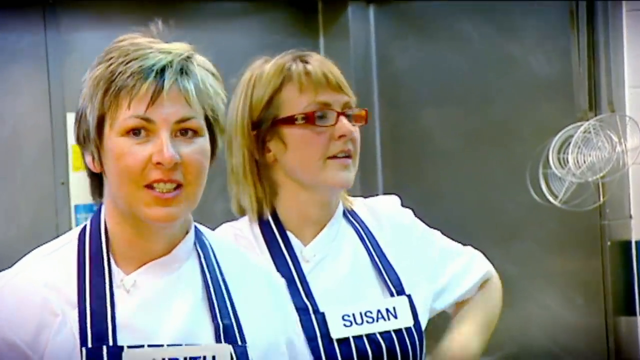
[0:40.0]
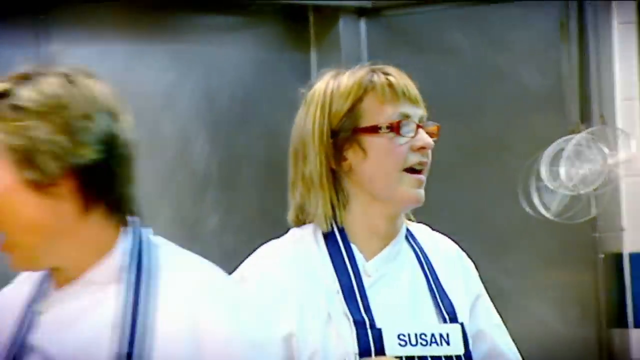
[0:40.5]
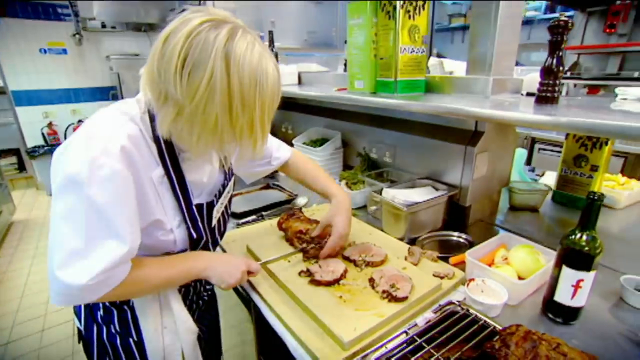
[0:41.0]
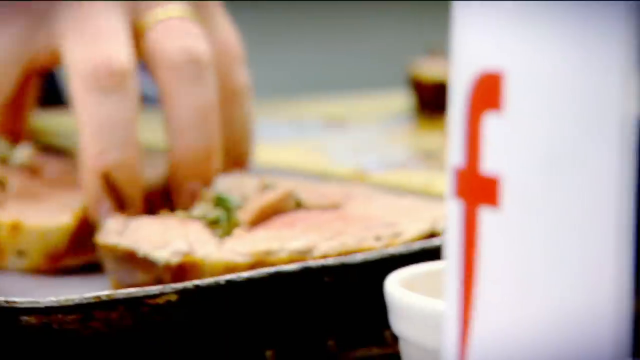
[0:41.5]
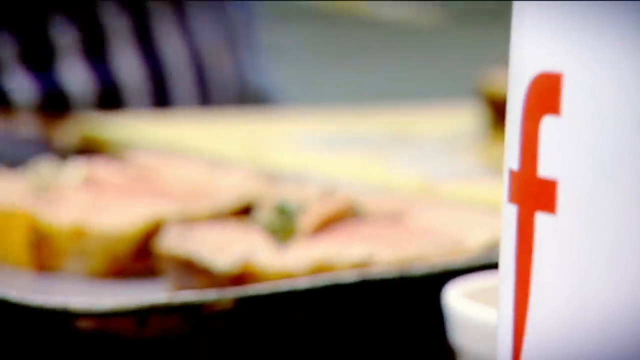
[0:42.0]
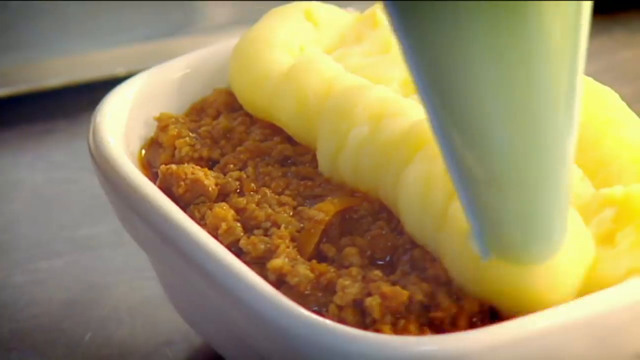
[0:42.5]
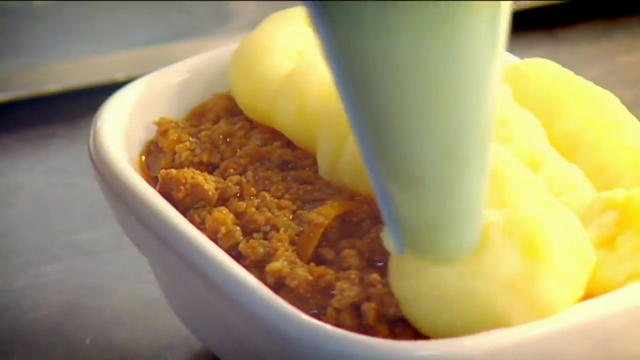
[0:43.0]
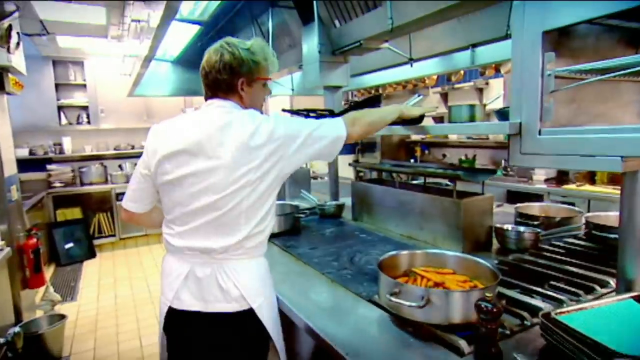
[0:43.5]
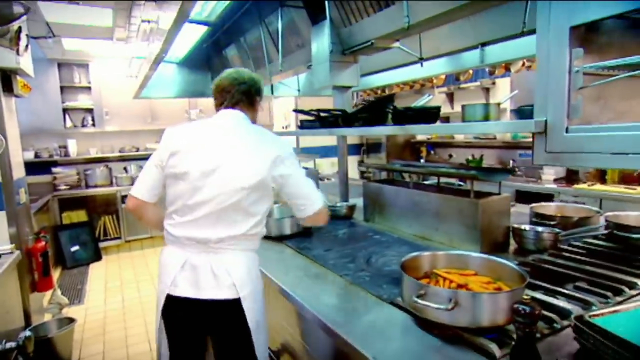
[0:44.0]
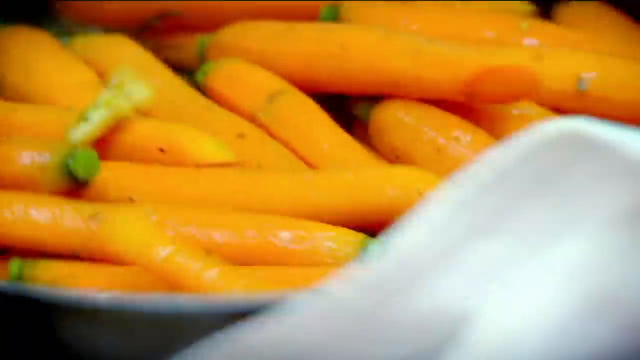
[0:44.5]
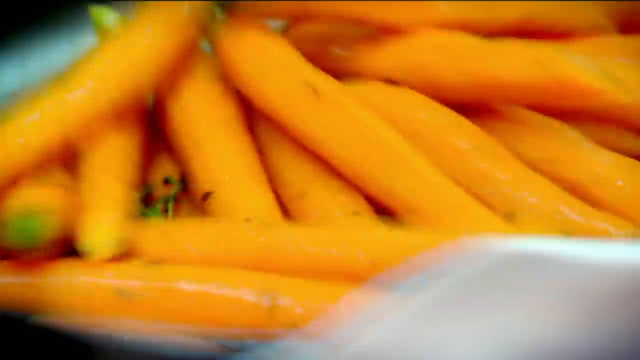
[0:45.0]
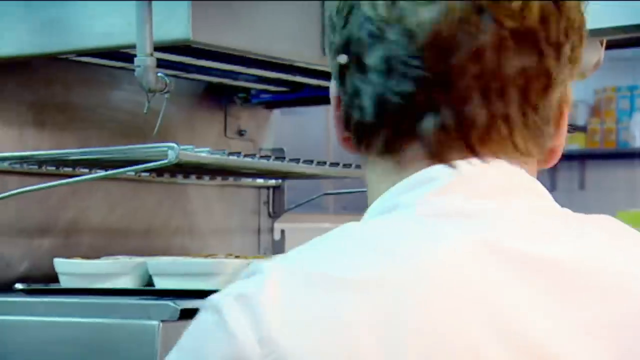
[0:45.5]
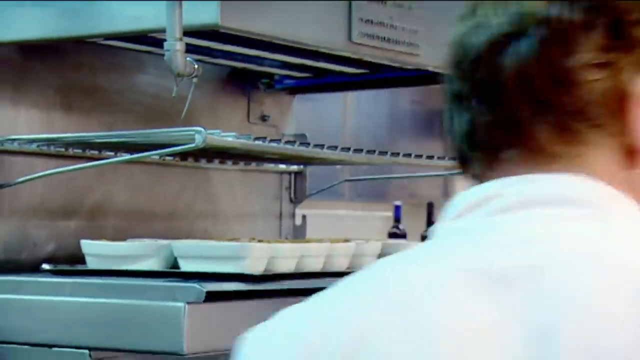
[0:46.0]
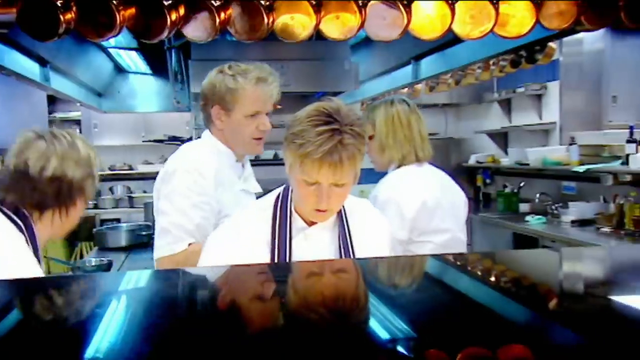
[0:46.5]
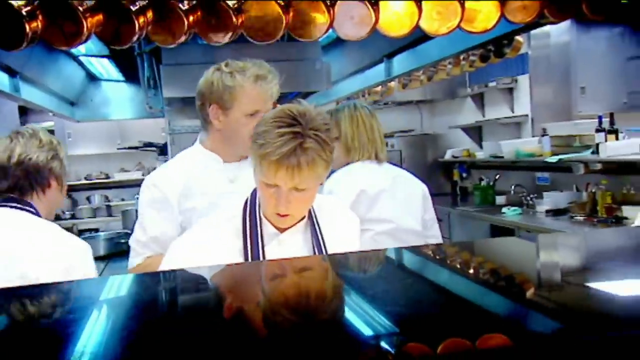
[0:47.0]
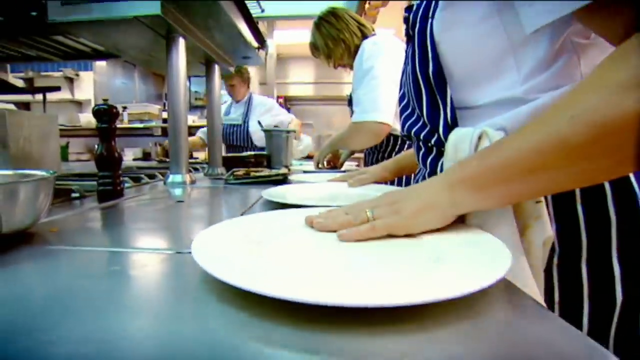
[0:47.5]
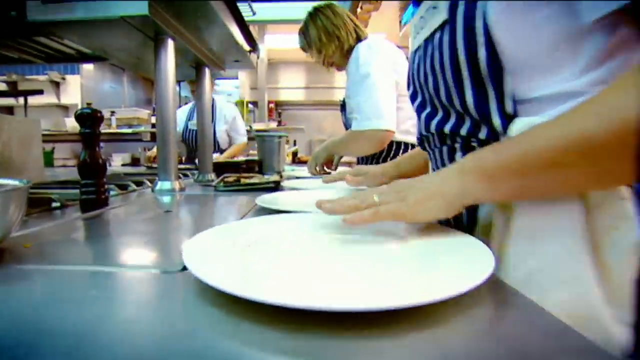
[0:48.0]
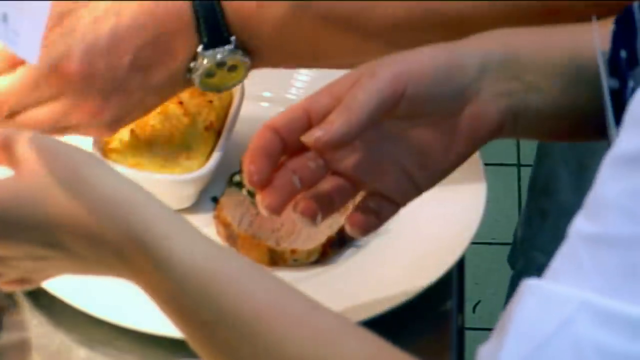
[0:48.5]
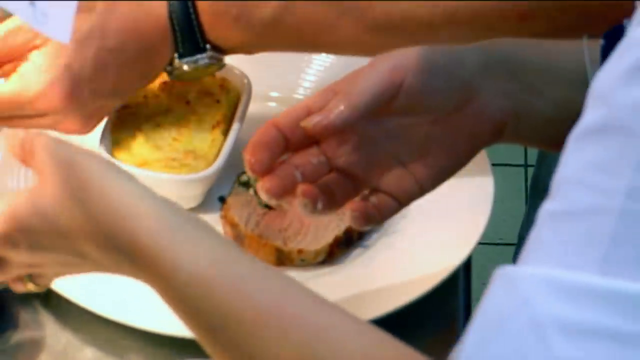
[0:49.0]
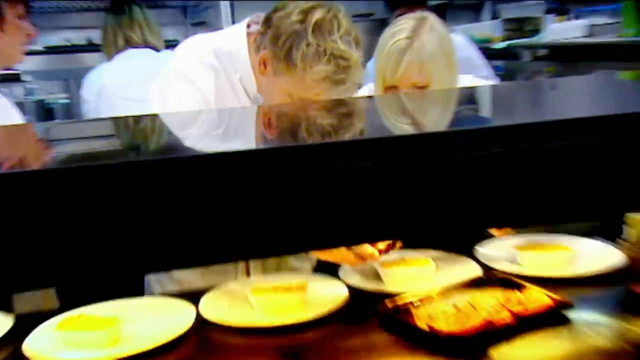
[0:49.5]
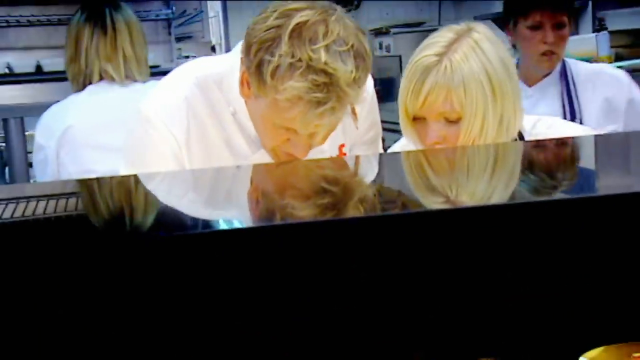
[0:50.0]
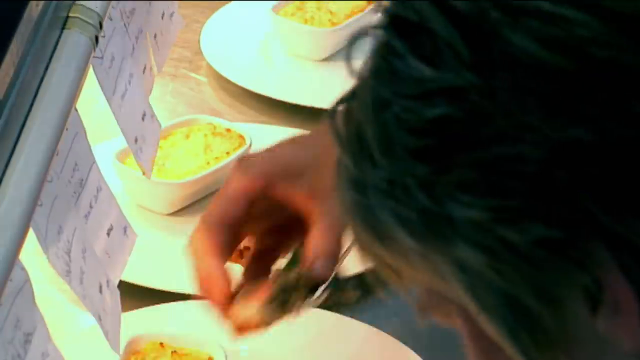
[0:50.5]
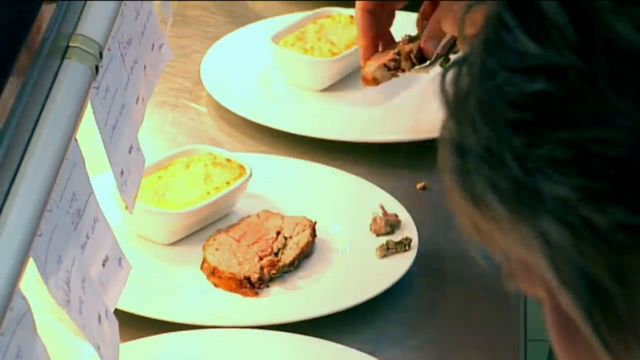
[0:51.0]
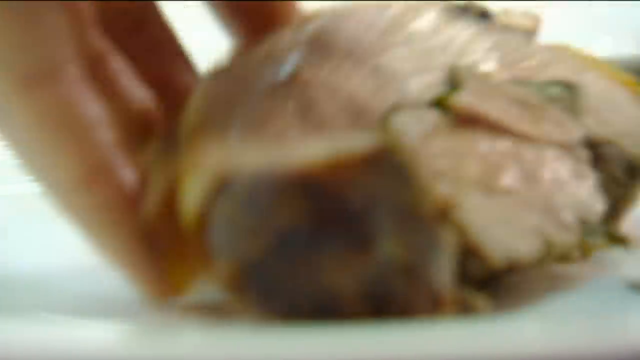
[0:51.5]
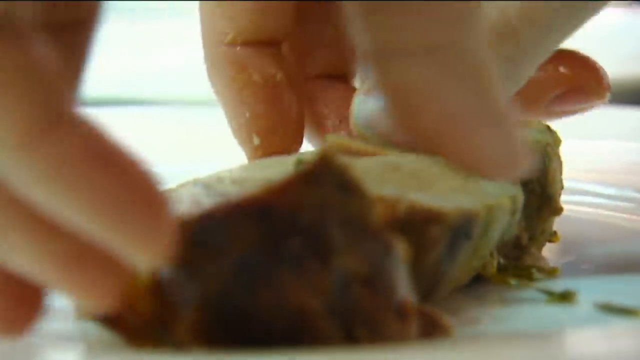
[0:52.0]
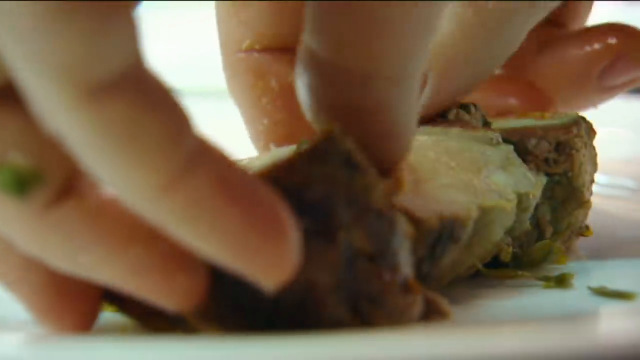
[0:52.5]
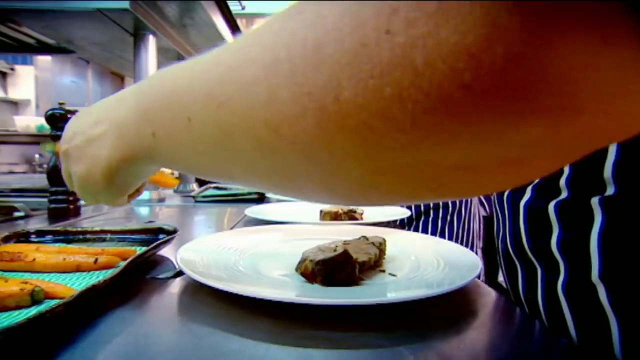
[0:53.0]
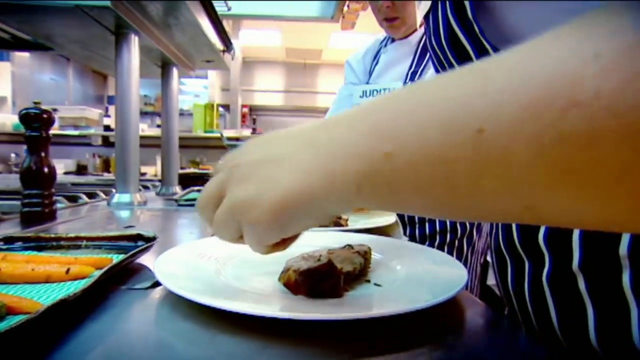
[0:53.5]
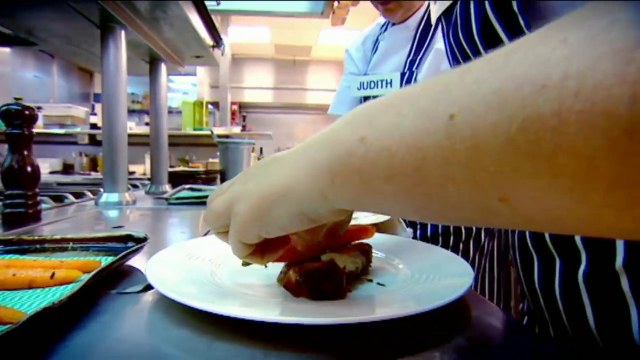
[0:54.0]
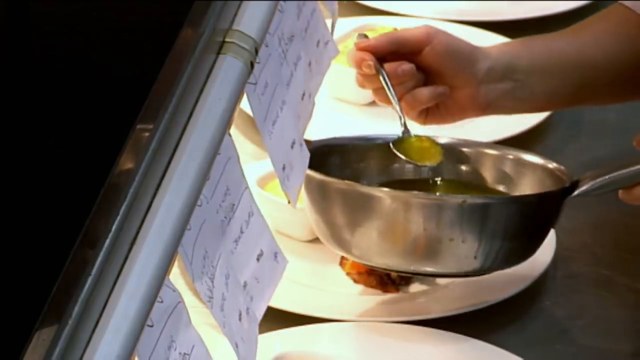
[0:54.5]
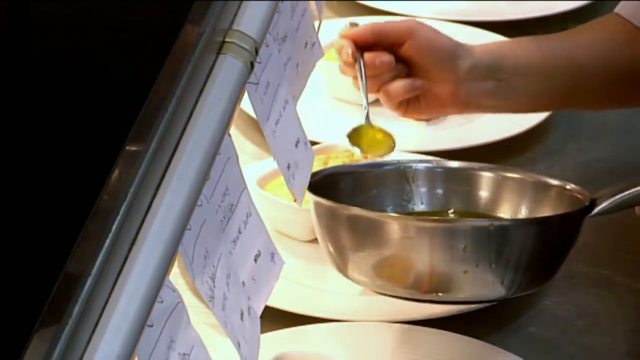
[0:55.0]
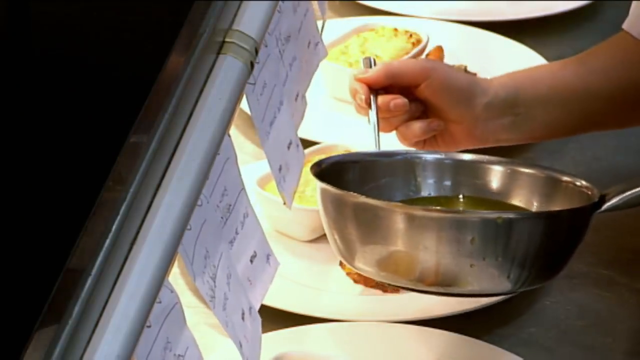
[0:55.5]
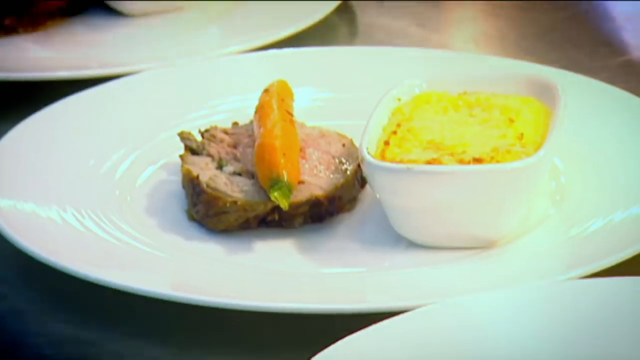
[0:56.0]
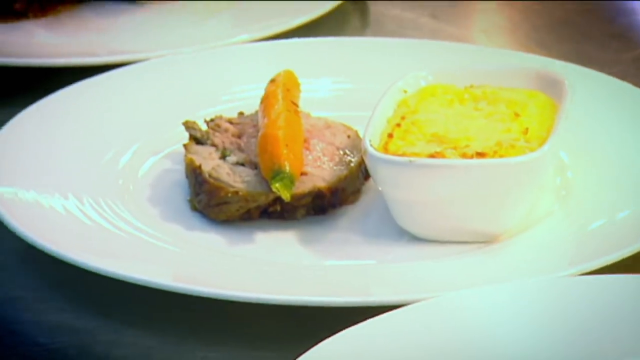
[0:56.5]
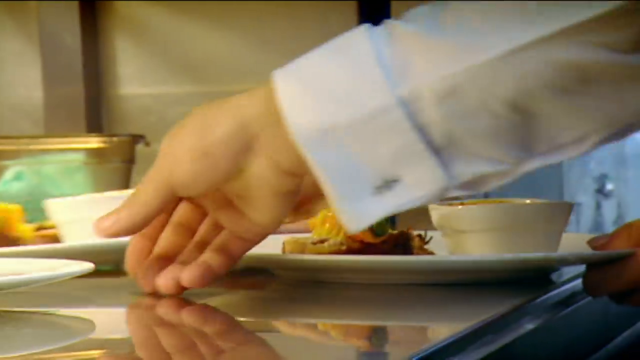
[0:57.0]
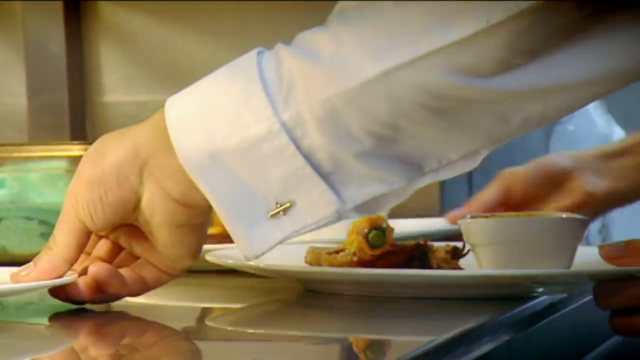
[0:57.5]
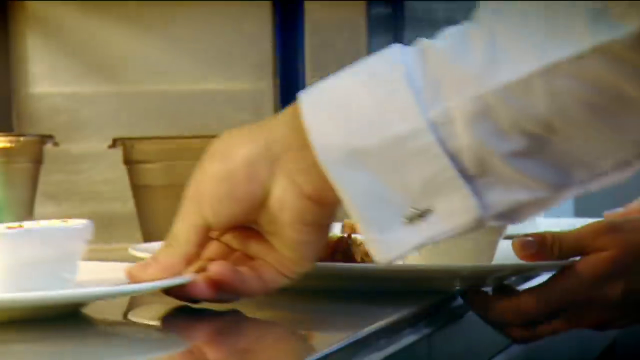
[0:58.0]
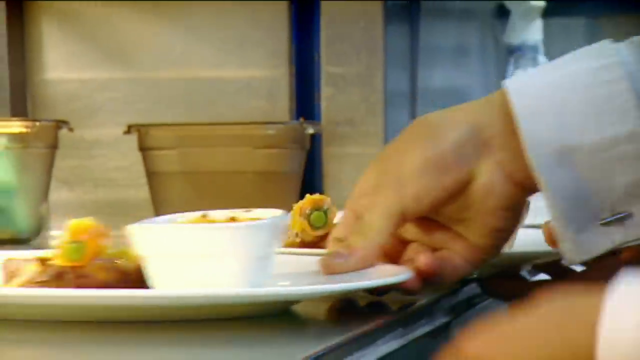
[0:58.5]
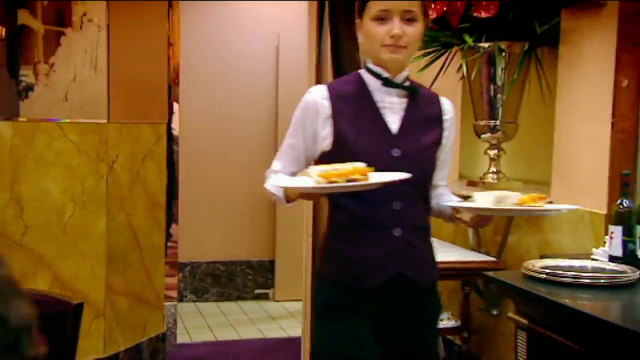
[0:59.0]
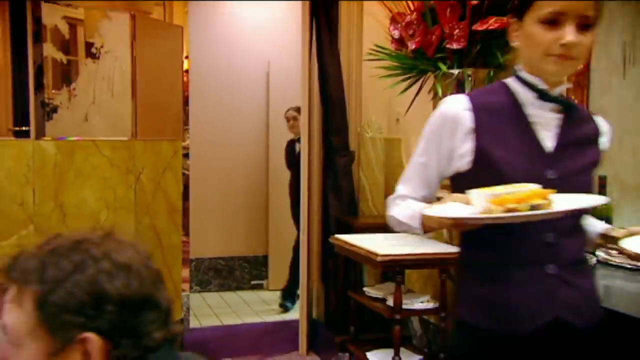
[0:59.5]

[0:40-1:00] Two female chefs cut the meat while the head chef, dressed differently from them, points and shows them what to do. Carrots are washed in water. The head chef walks around busily while the assistant chefs, dressed in white and black with blue striped aprons, lay out plates, dishing out the meat along with other food and vegetables and adding sauce. A waitress walks toward the restaurant and serves the food dished up in the kitchen. The restaurant is full of people, some waiting to be served and some eating the food they have already ordered. The restaurant is laid out with round tables and chairs.